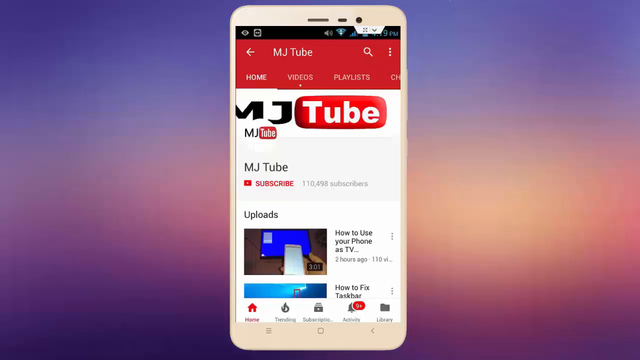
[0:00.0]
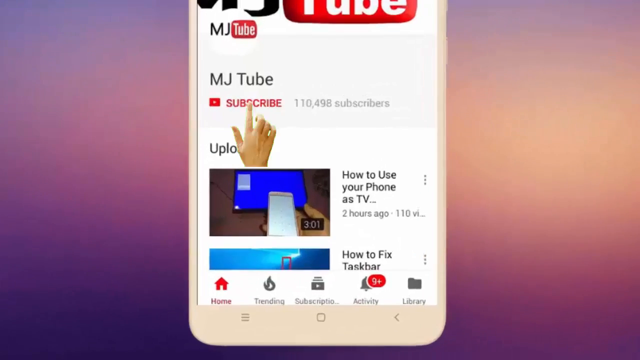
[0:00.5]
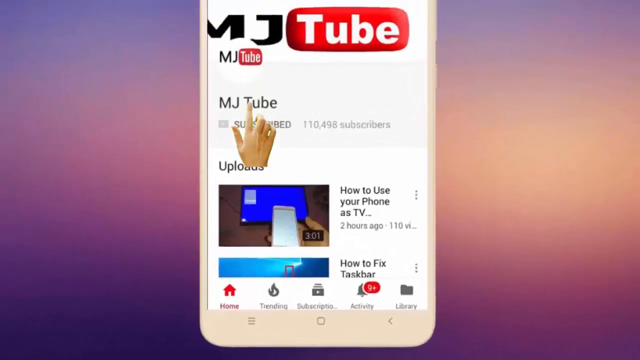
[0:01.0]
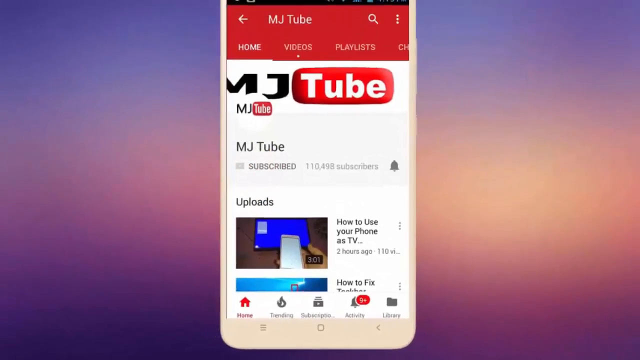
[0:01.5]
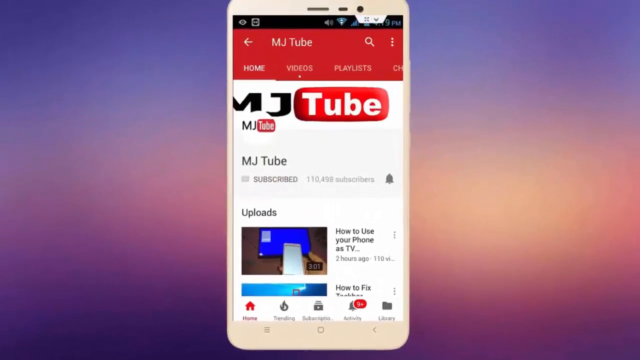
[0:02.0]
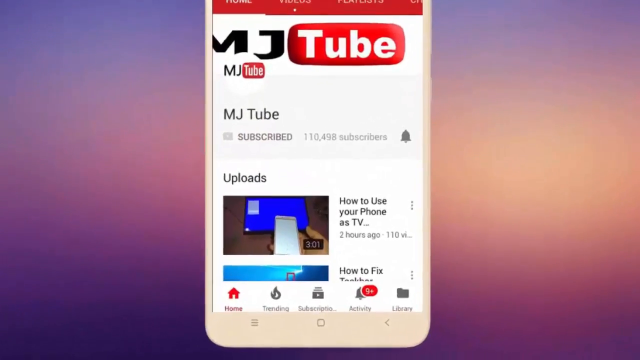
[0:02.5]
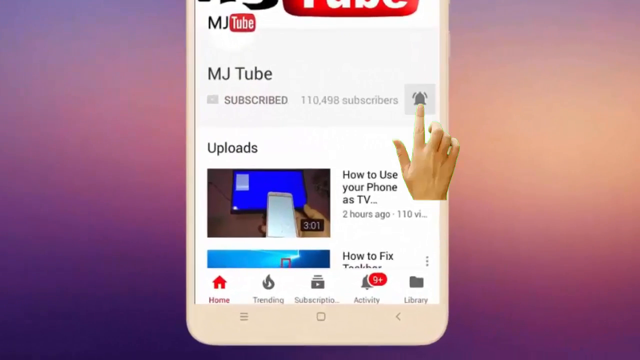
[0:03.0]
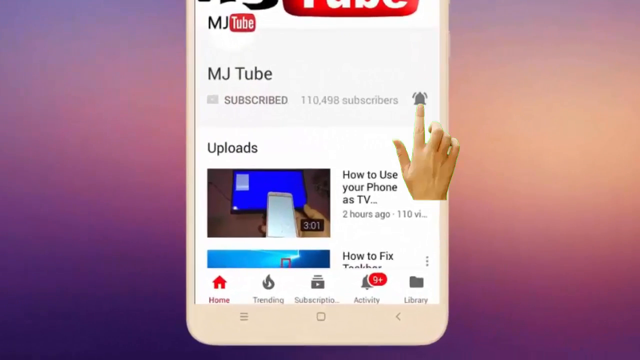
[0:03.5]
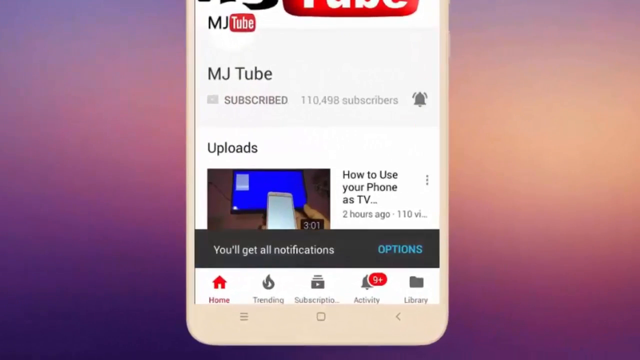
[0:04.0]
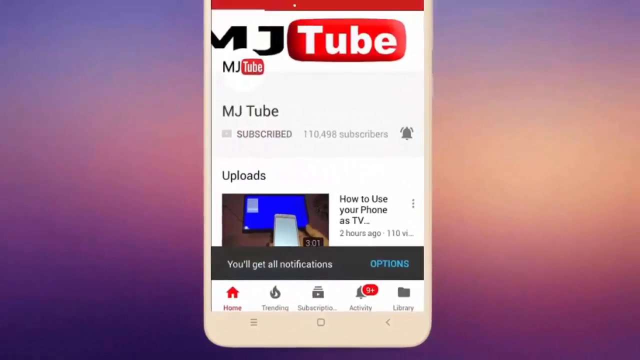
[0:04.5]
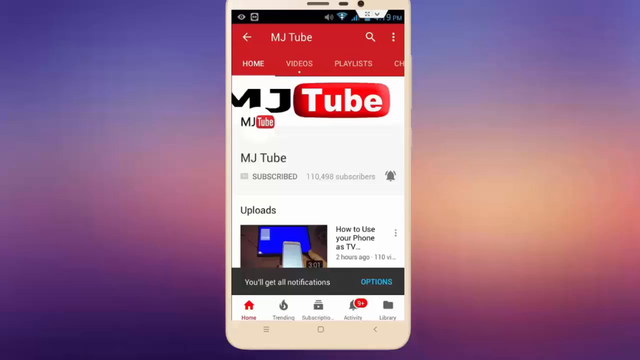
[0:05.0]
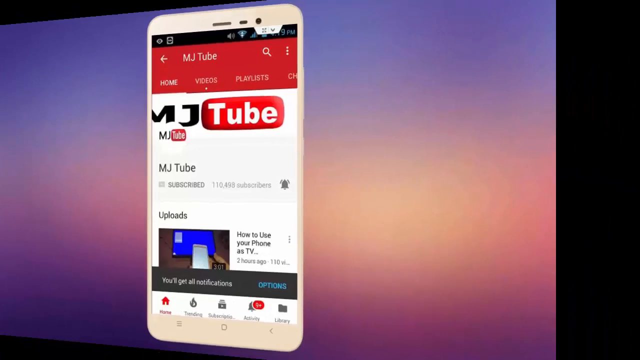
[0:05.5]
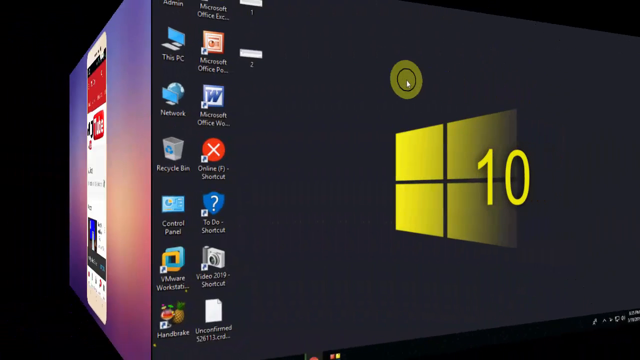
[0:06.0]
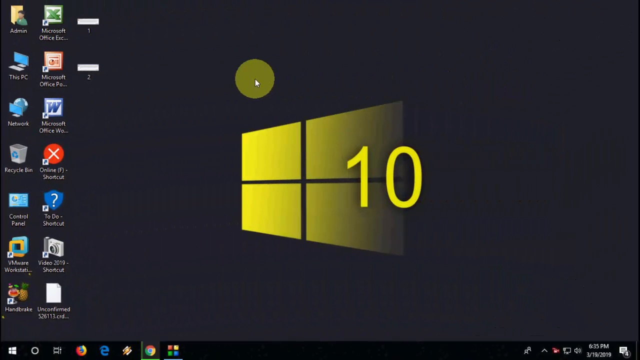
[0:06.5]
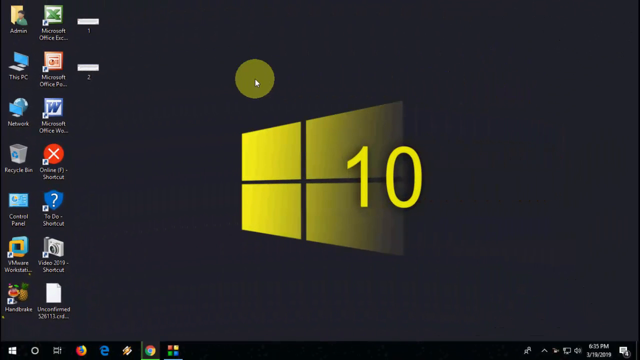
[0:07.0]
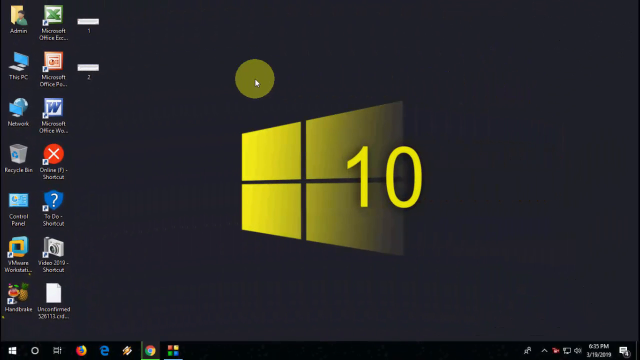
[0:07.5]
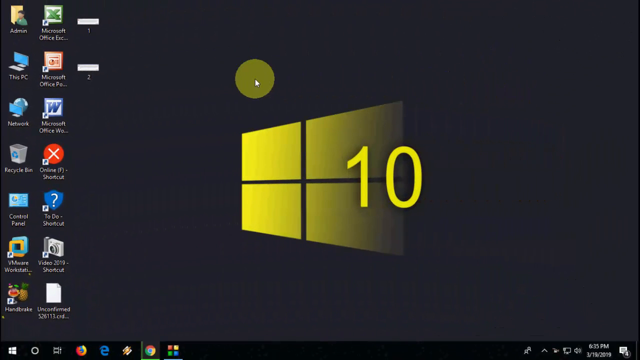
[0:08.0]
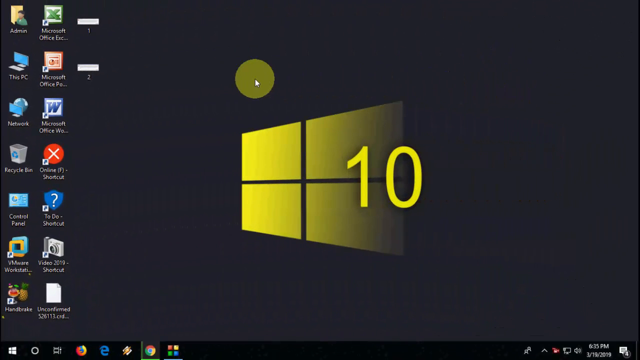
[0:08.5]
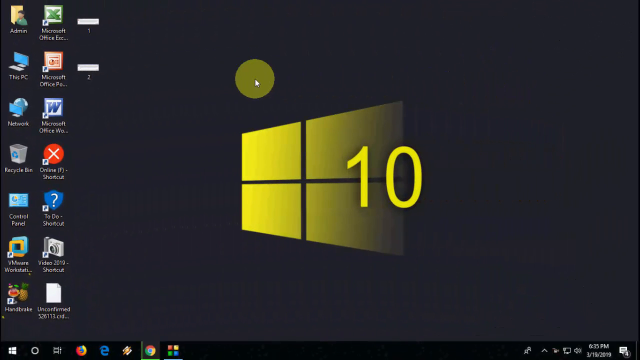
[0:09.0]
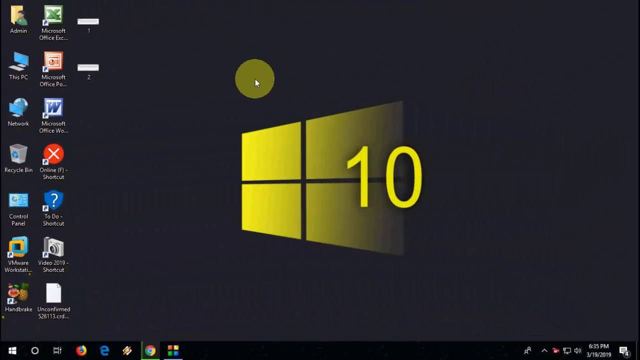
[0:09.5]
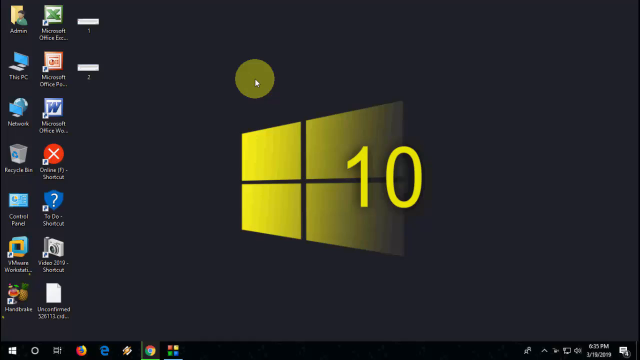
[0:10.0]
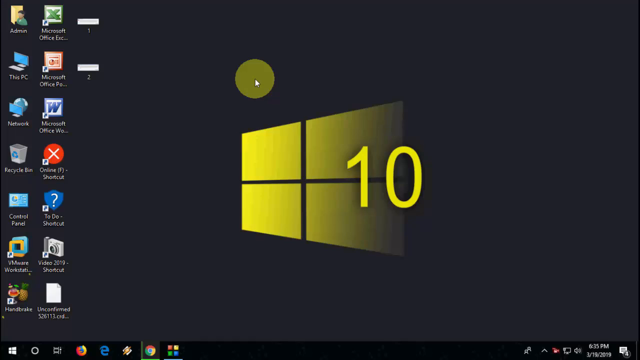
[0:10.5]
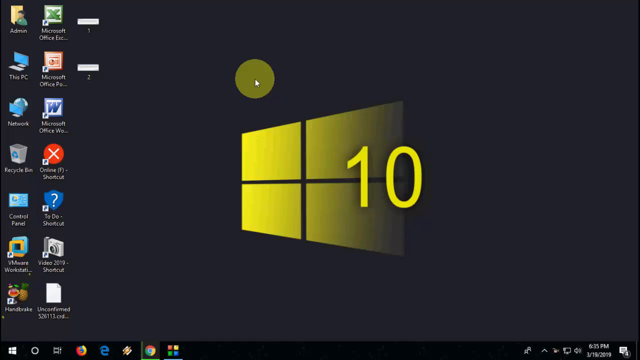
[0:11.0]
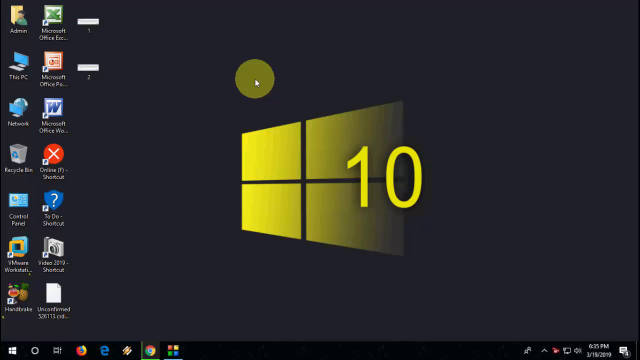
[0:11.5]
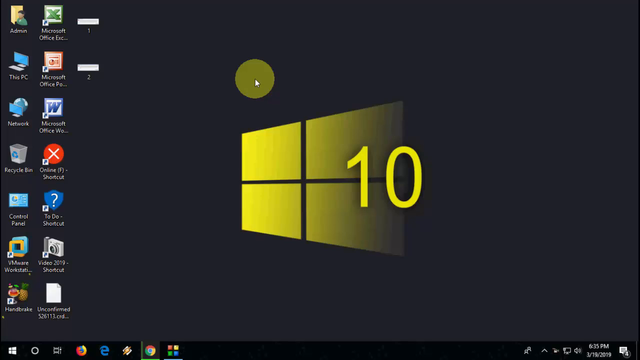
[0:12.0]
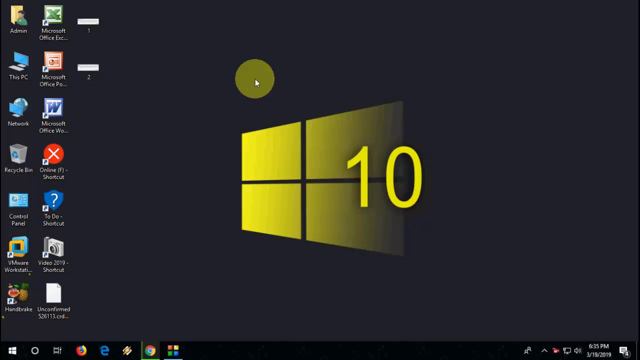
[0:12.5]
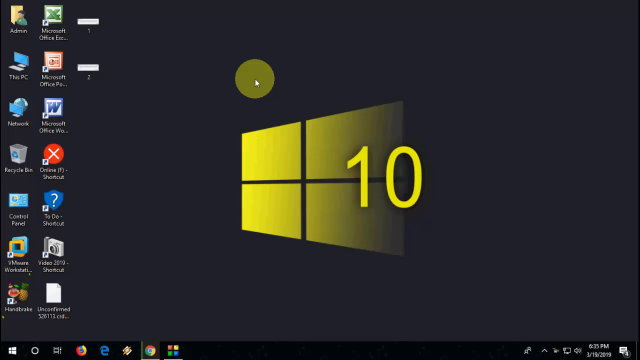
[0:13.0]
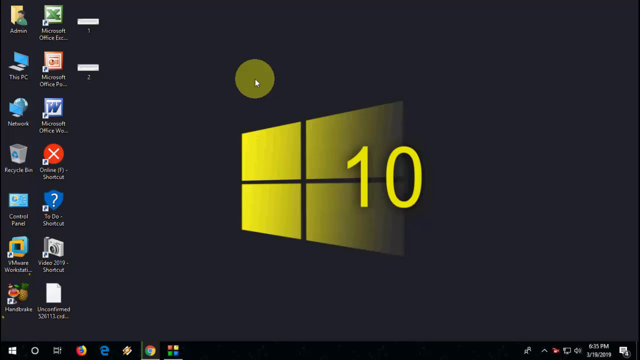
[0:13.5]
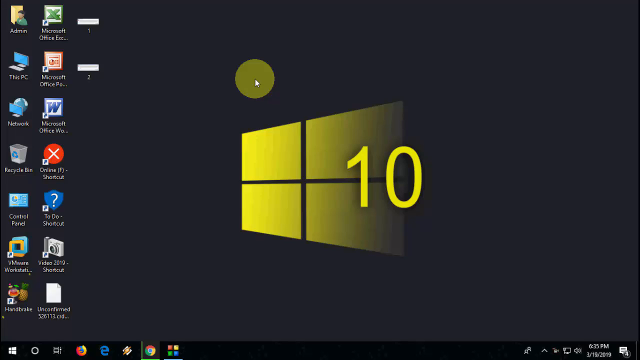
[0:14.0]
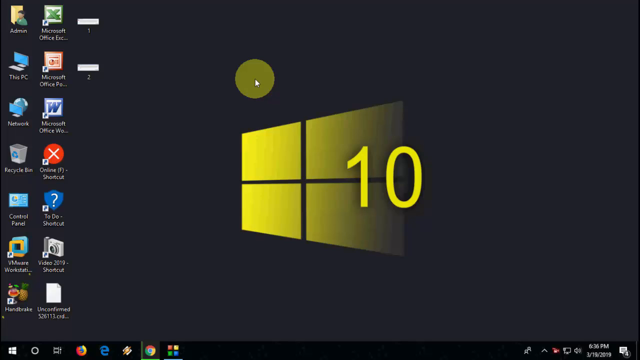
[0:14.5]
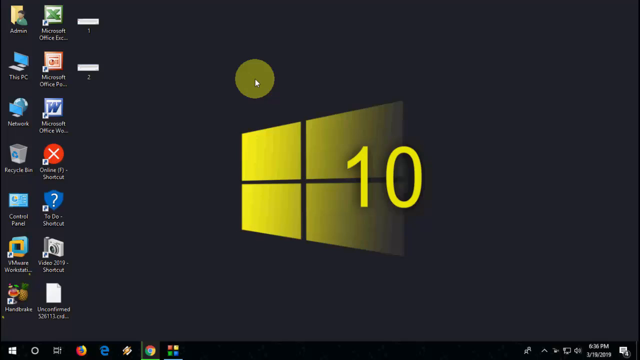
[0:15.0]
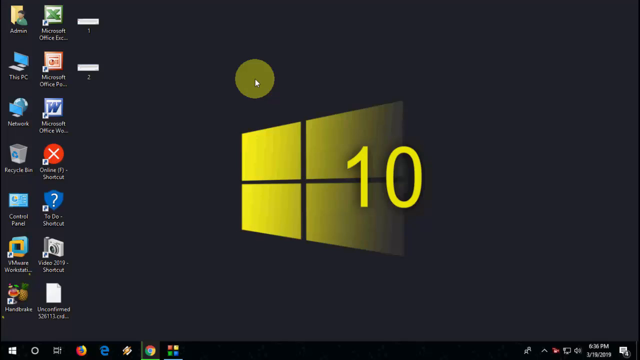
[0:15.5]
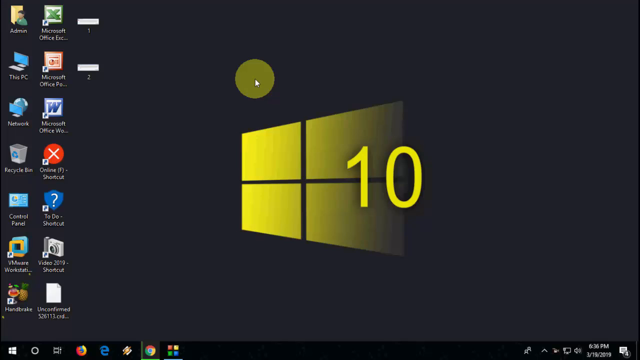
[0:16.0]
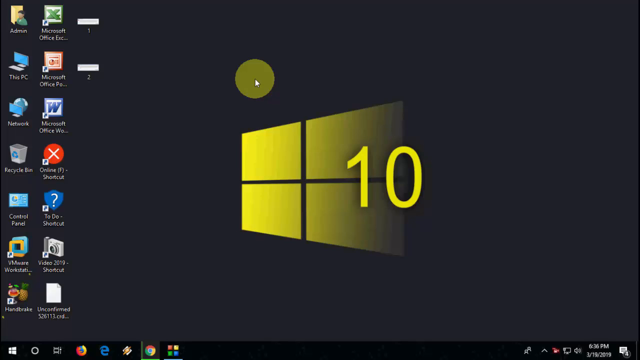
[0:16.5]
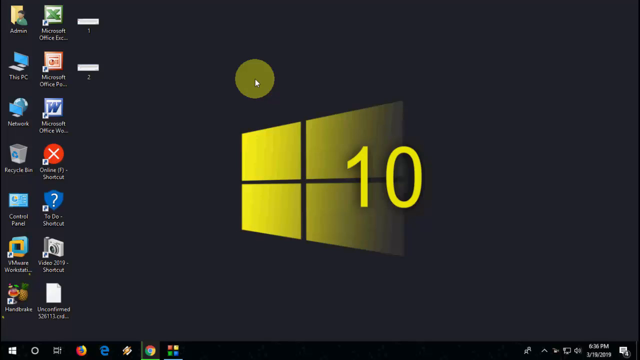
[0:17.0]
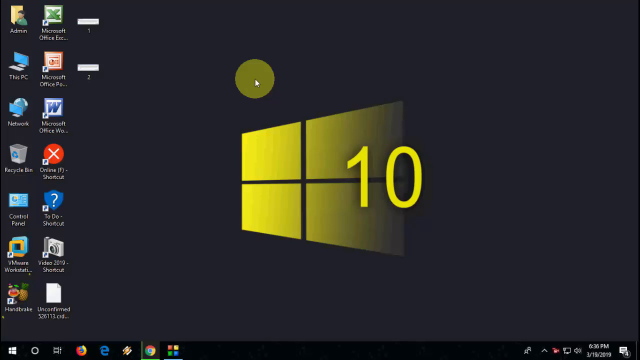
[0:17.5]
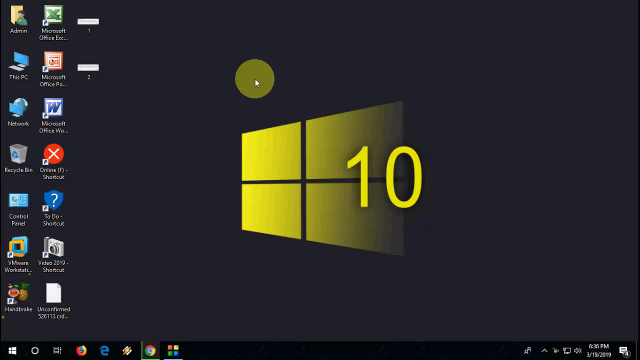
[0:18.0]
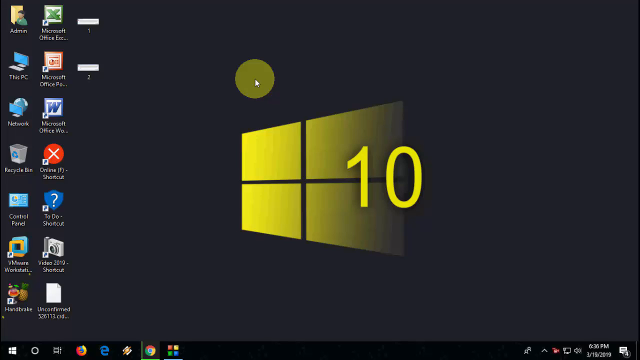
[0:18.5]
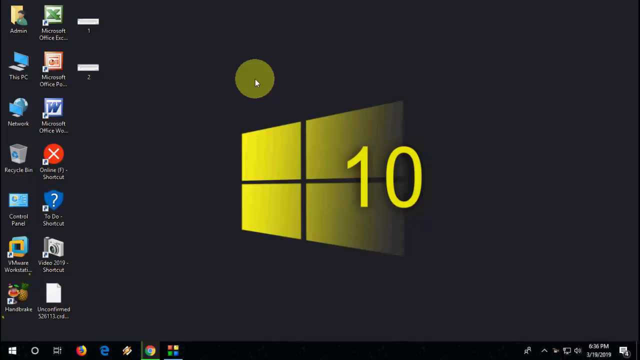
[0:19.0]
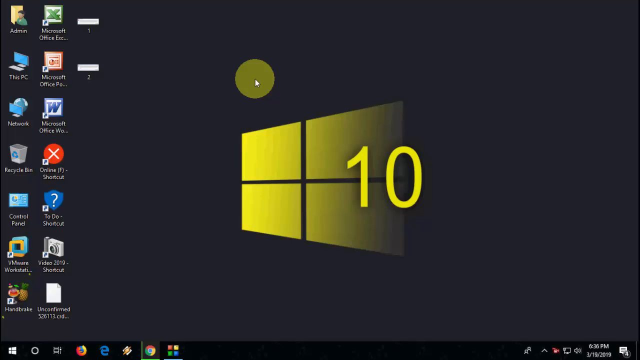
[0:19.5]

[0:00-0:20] A 3D render shows a smartphone with someone recording on it. The view zooms in and out on the smartphone and shows a hand appearing next to a bell icon on a YouTube page. It then transitions toward the right to show someone's desktop. The desktop background has the Windows logo, which appears yellow, with the number 10 on it, and various icons are visible on the desktop. The mouse is above the Windows logo and is surrounded by a yellow circle. The desktop has three columns of shortcuts and icons: the first two columns have seven icons each and the last has only two. In the first column there is a folder showing the outline of a person, labeled "admin"; beneath it, "this PC" appears under a computer icon; beneath that is a monitor in front of a globe that reads "network"; and beneath that is a recycling bin labeled "recycling bin".